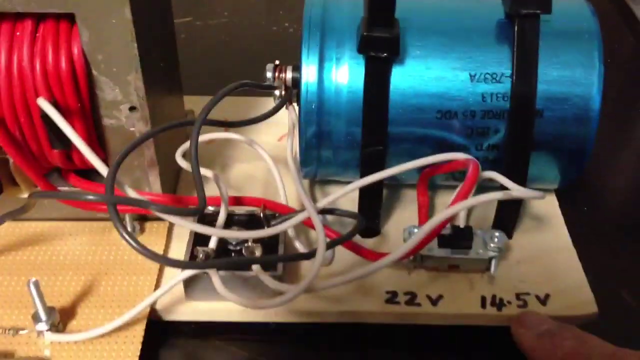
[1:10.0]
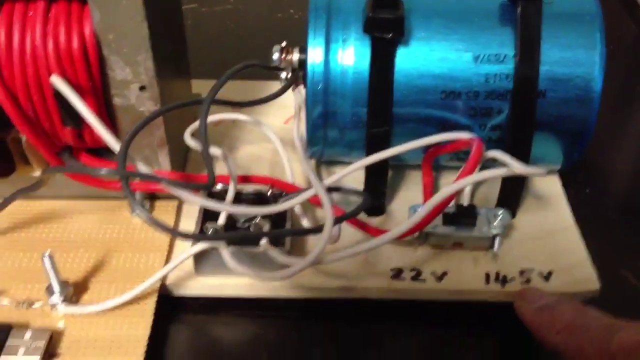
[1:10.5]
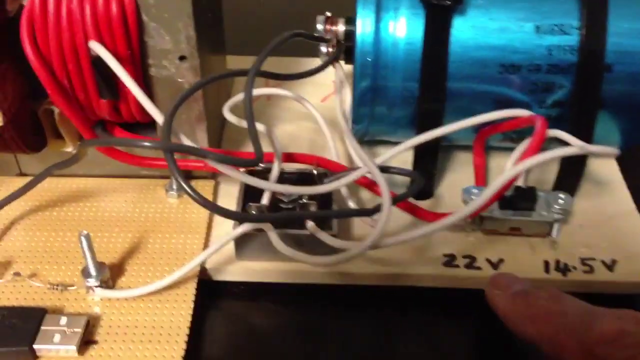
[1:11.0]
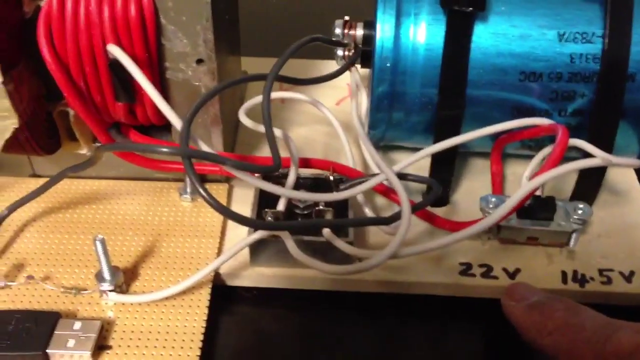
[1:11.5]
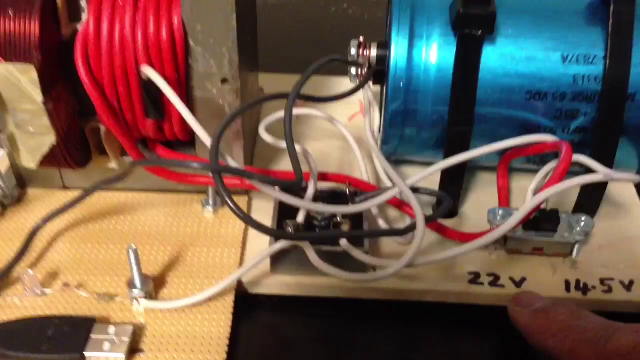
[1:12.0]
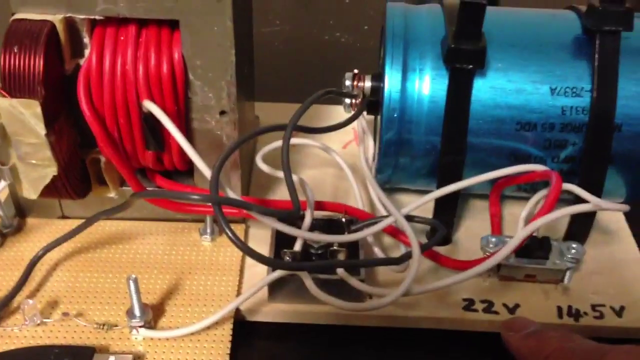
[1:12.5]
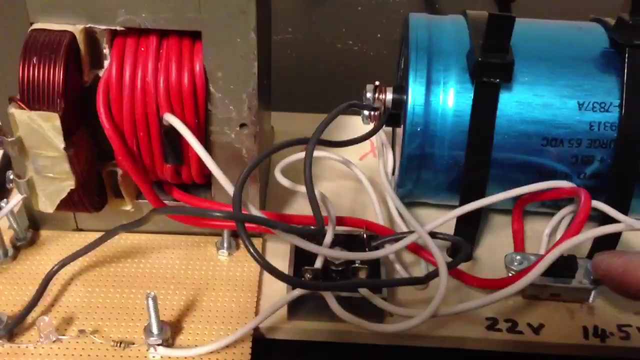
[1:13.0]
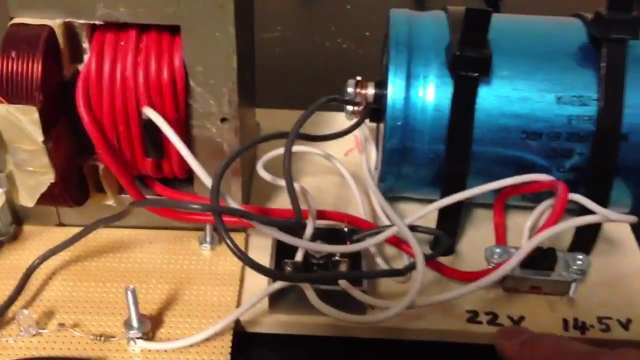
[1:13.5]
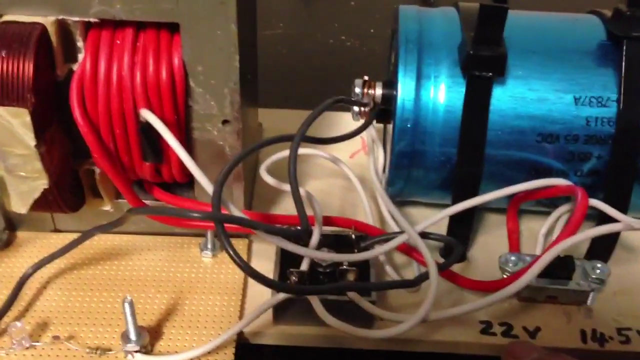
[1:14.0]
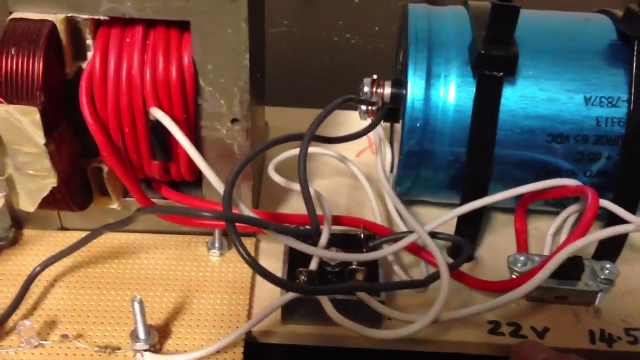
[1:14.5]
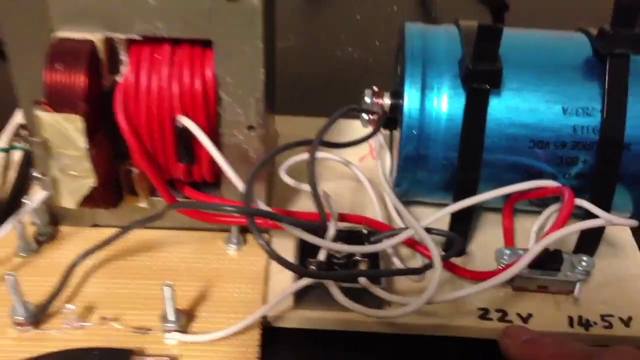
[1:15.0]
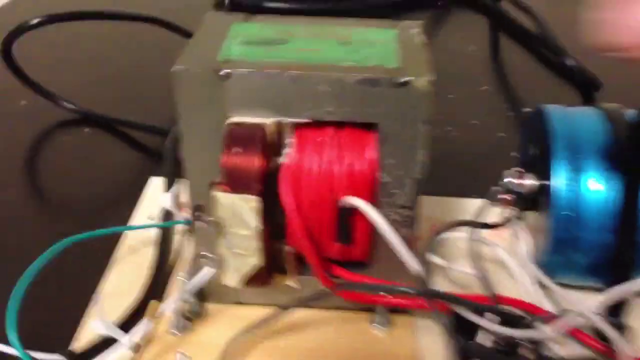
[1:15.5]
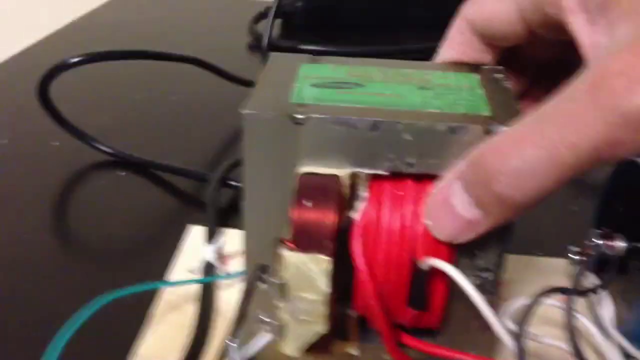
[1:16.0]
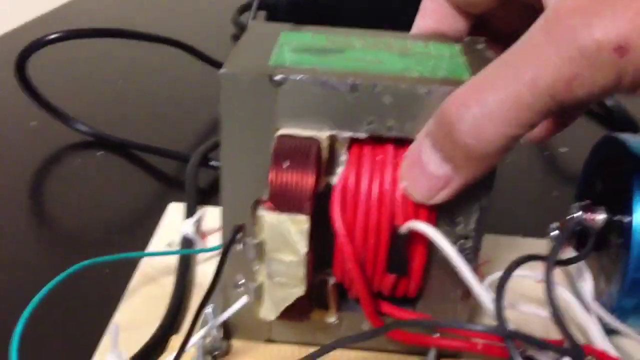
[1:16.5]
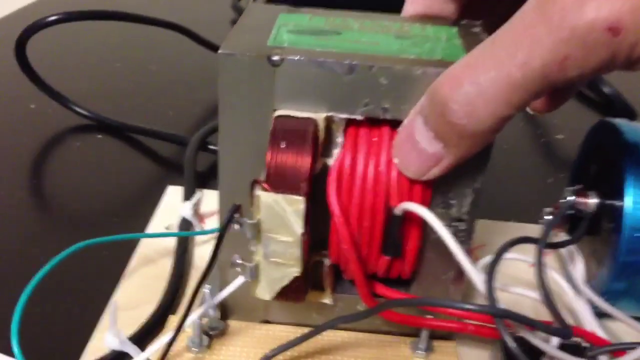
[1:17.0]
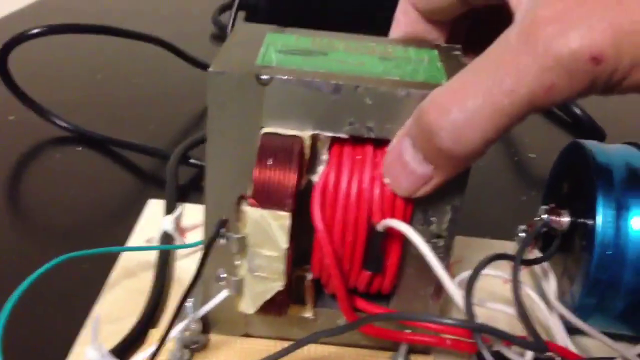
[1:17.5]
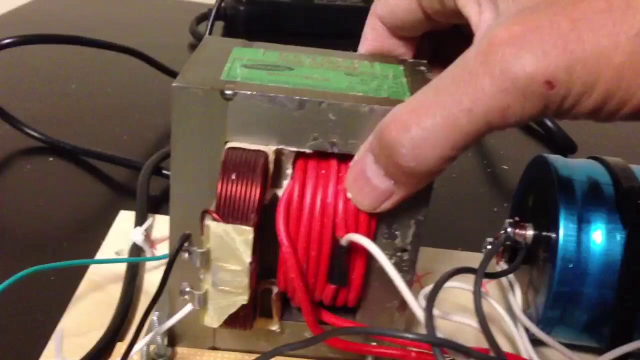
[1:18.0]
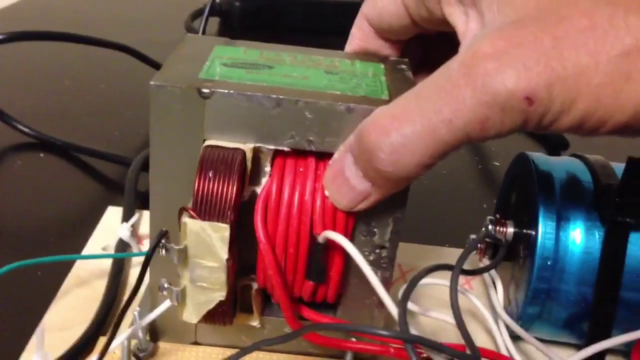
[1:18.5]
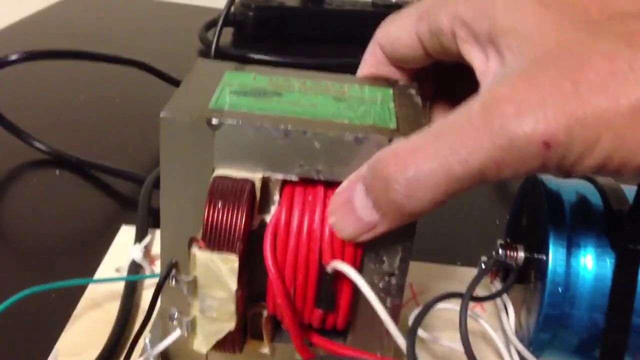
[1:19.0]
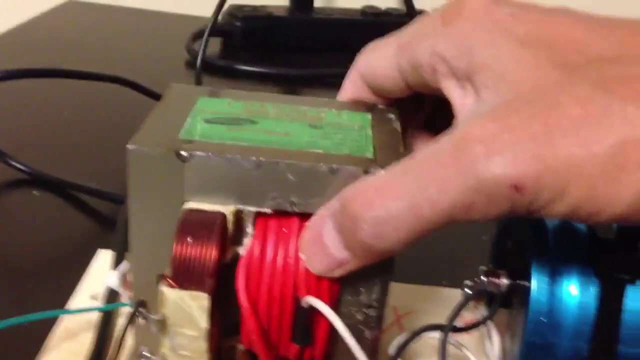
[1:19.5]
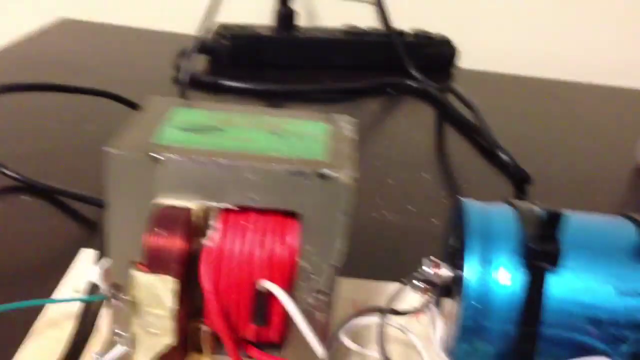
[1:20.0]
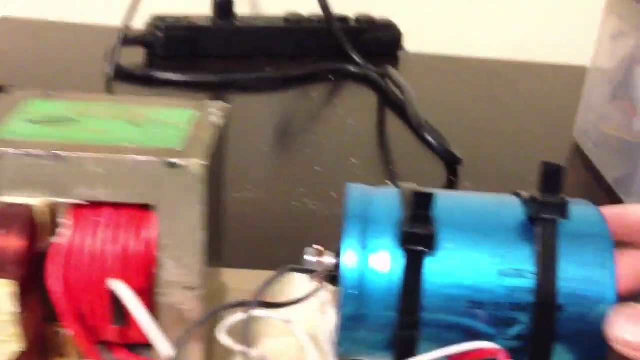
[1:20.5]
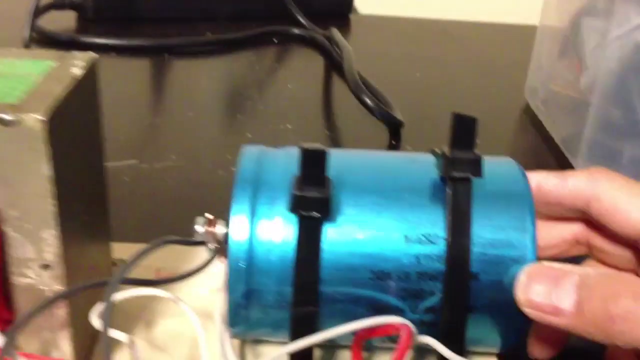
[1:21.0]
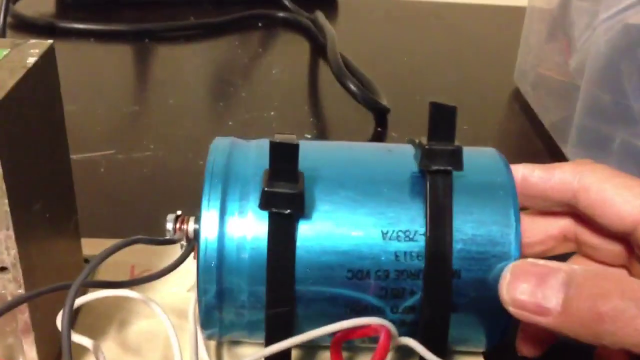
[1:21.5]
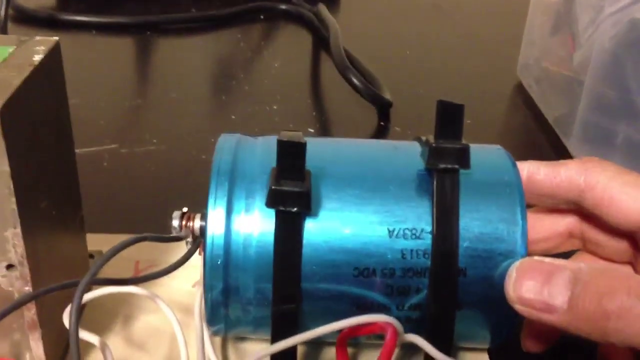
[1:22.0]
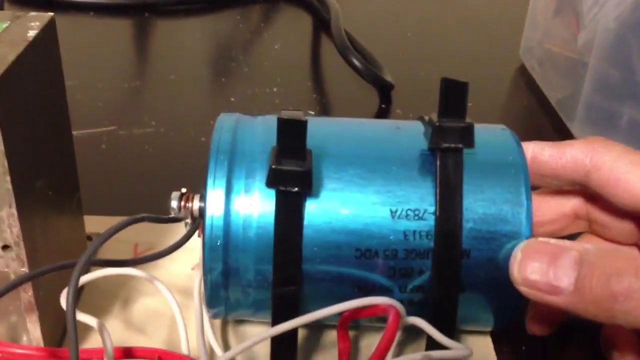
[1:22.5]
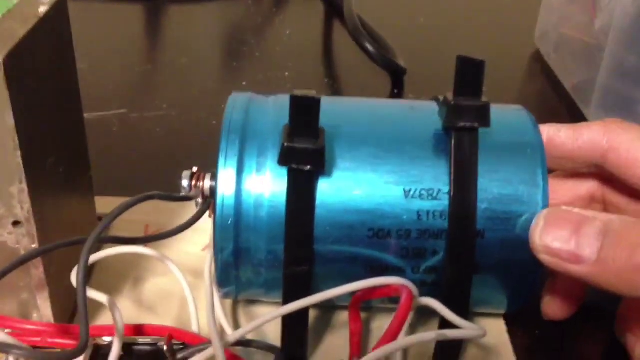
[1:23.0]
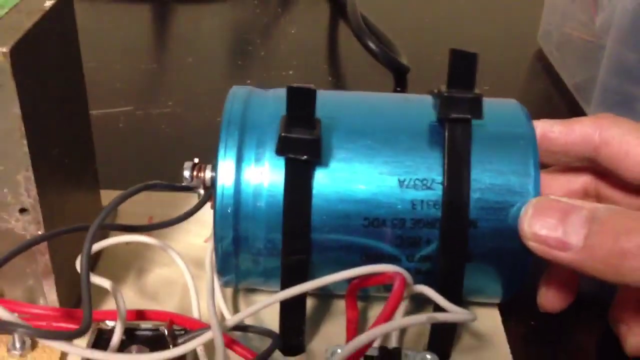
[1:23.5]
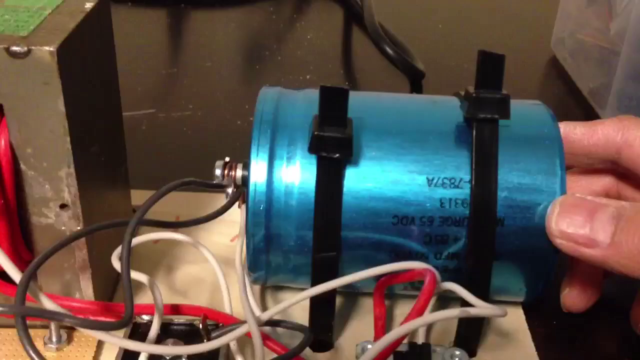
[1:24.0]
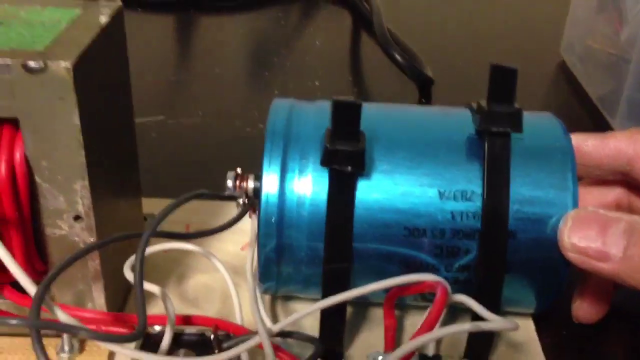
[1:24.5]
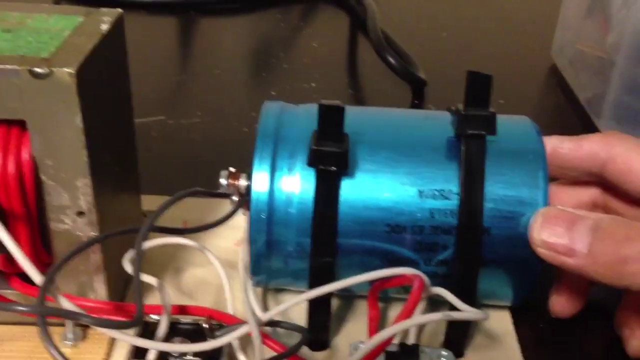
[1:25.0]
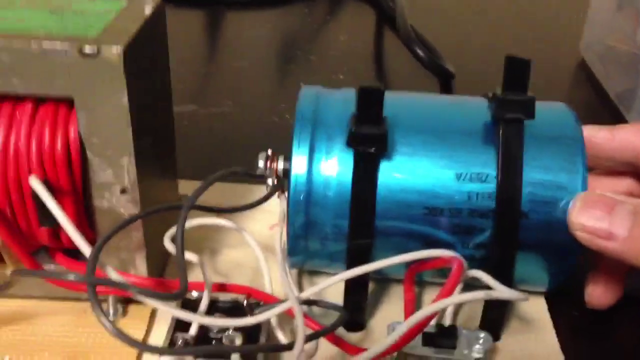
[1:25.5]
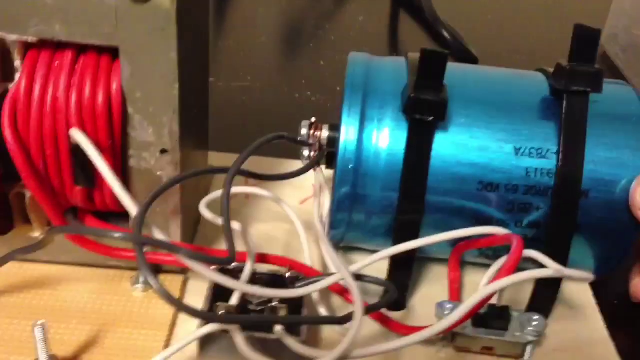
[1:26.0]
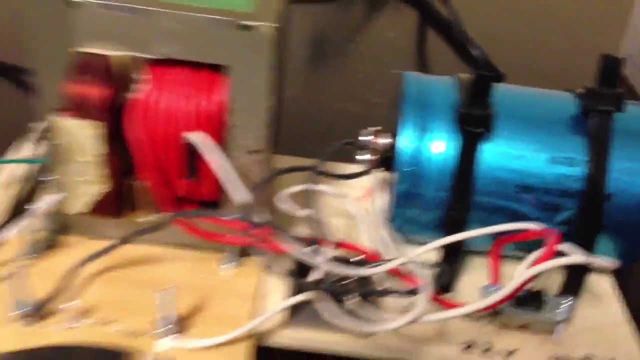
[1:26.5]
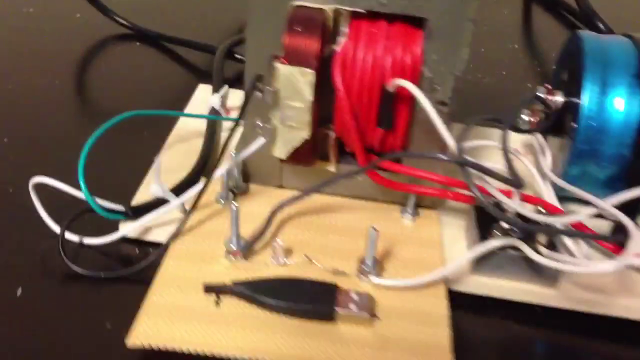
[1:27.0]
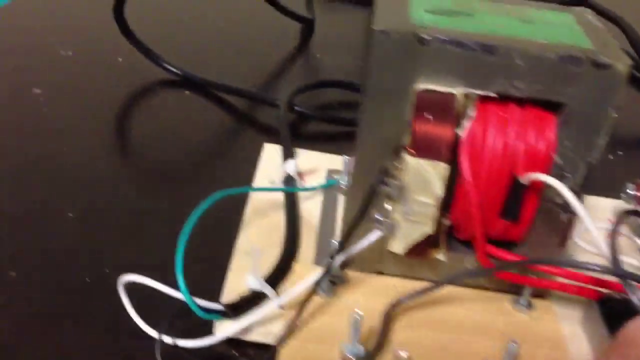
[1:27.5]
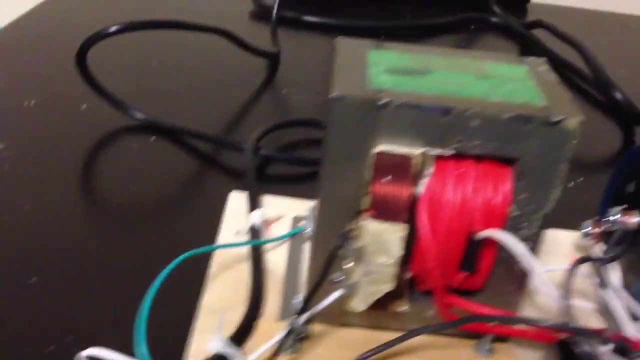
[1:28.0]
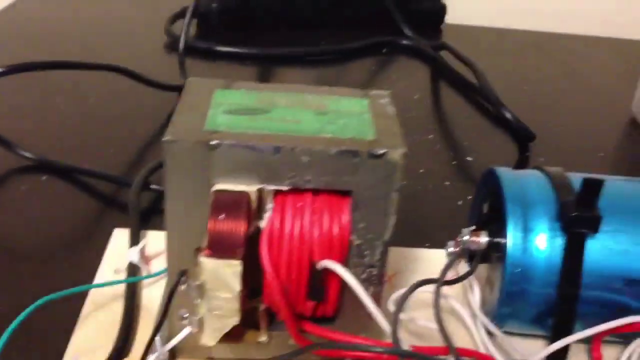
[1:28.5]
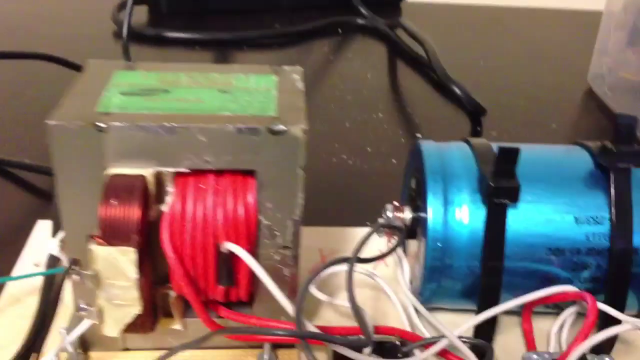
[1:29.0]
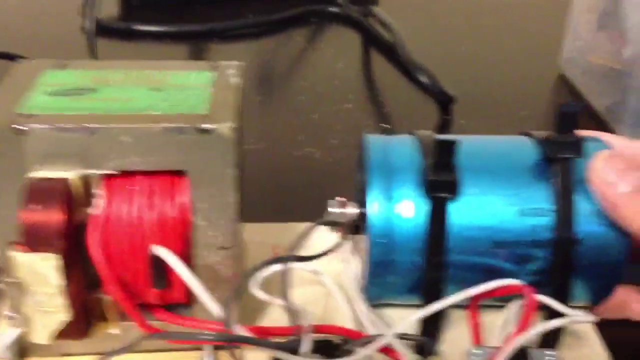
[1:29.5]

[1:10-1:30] The camera focuses on the space between the metal block and the blue metal cylinder. A hand comes up from the bottom and points to the Sharpie-written "22V". The camera wobbles upward, and the hand briefly gestures at the metal clamp in front of the cylinder. The camera abruptly moves to the metal box, and the hand grasps the red wire spool on the metal block between thumb and forefinger and briefly squeezes it. The hand is slightly tanned and slightly chipped near the base of the thumb. A black surge protector with one plug in it is now visible in the background. The hand moves to the metal cylinder and grasps it with thumb, forefinger and middle finger for about five seconds. The camera moves back to the metal block and wobbles back to the metal cylinder.